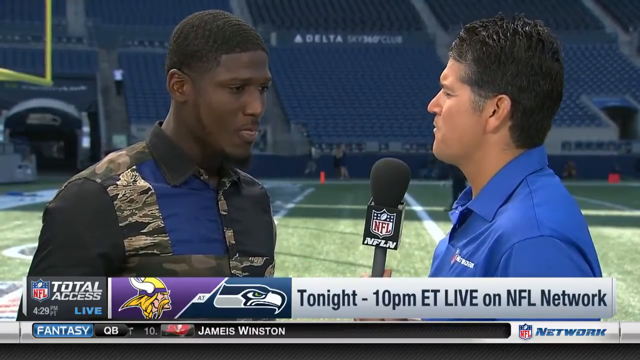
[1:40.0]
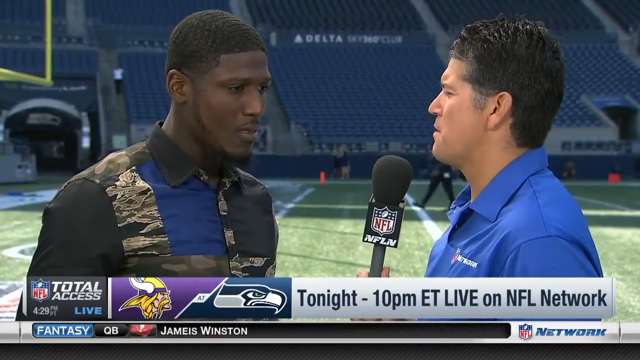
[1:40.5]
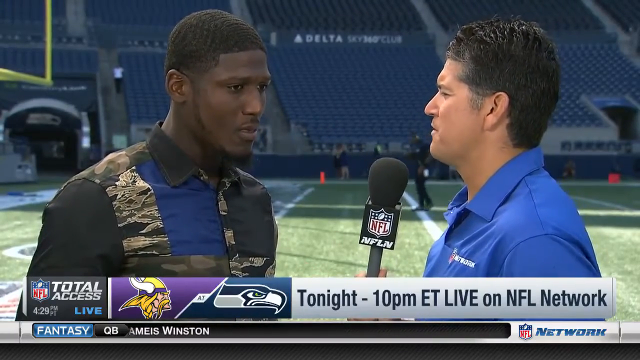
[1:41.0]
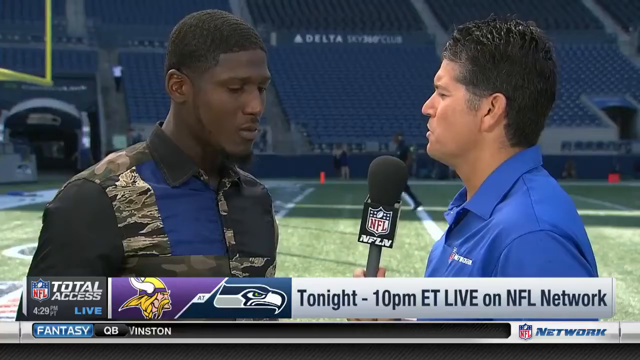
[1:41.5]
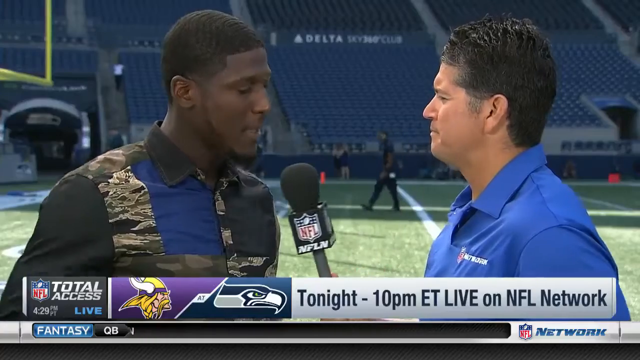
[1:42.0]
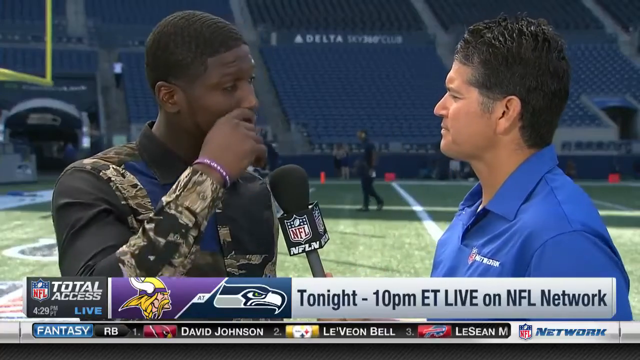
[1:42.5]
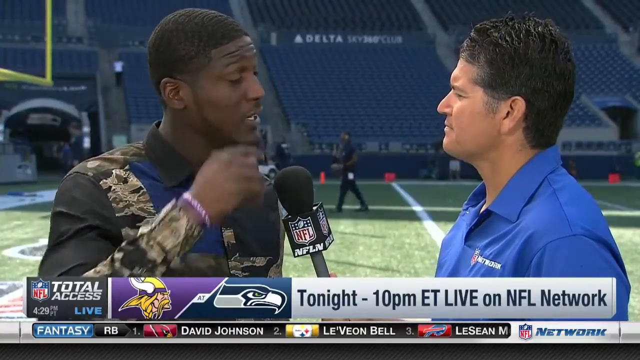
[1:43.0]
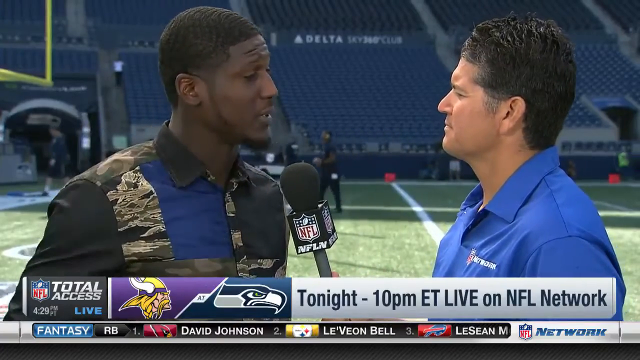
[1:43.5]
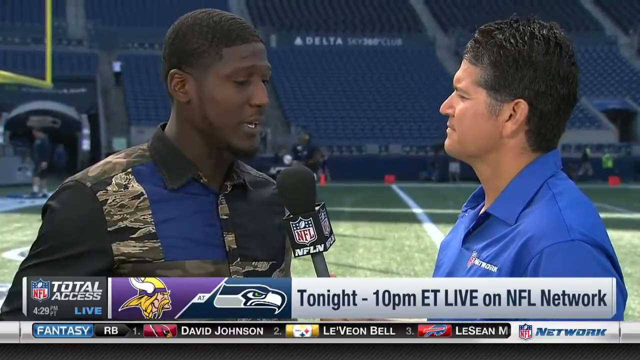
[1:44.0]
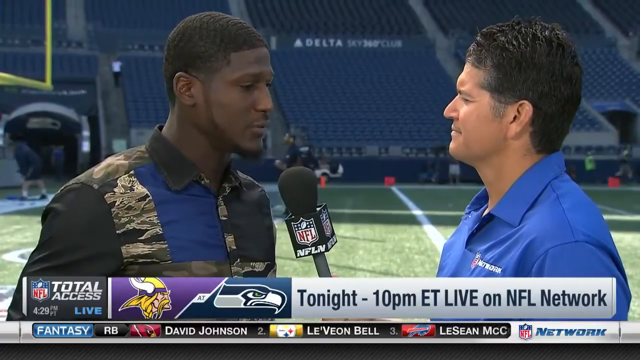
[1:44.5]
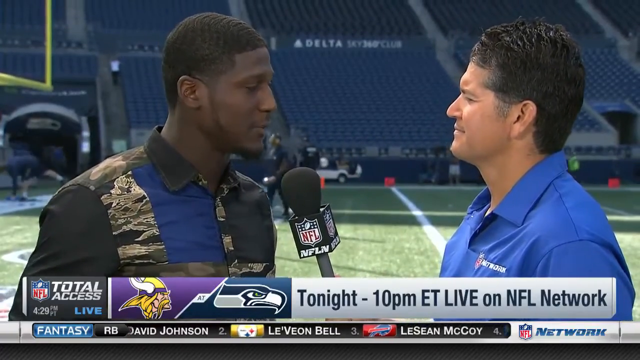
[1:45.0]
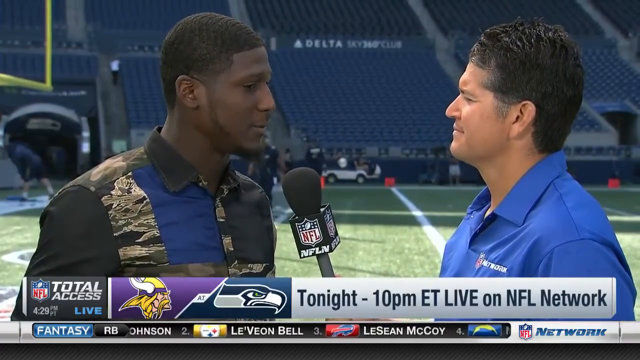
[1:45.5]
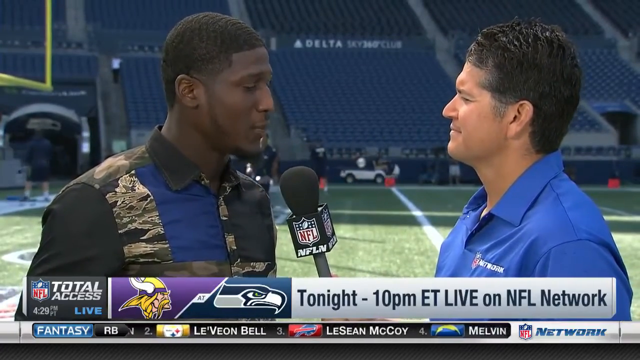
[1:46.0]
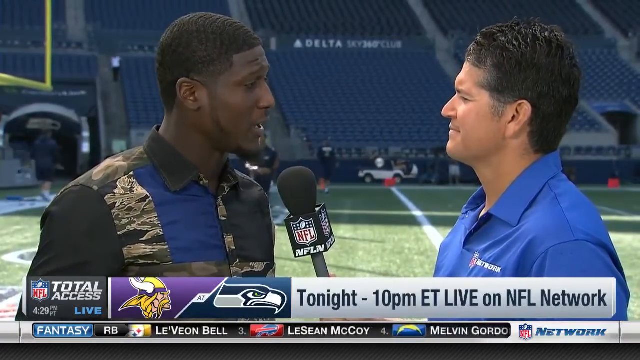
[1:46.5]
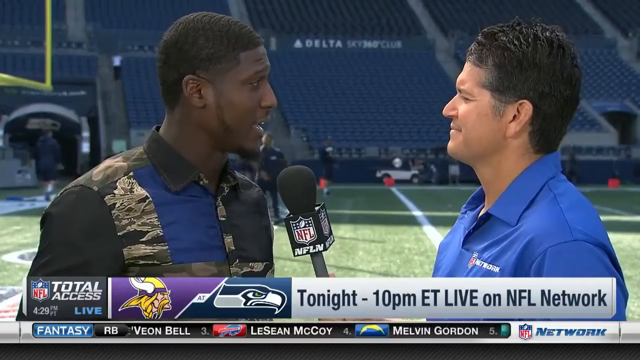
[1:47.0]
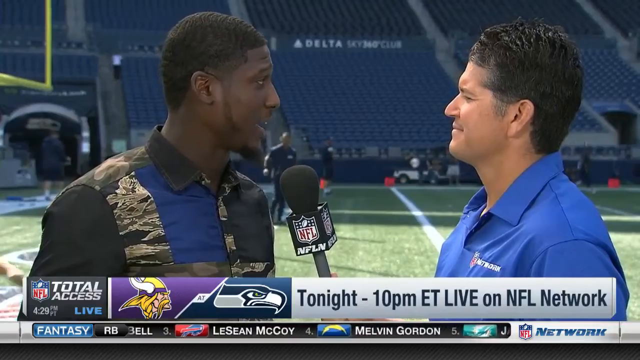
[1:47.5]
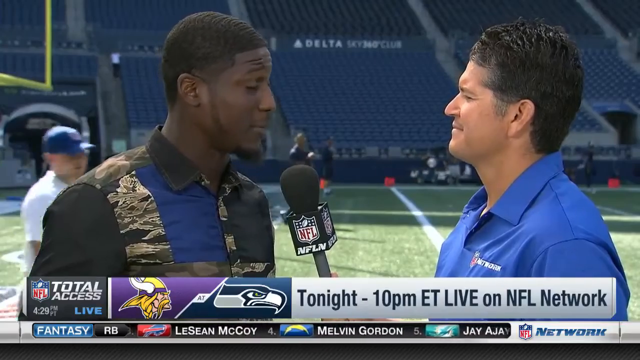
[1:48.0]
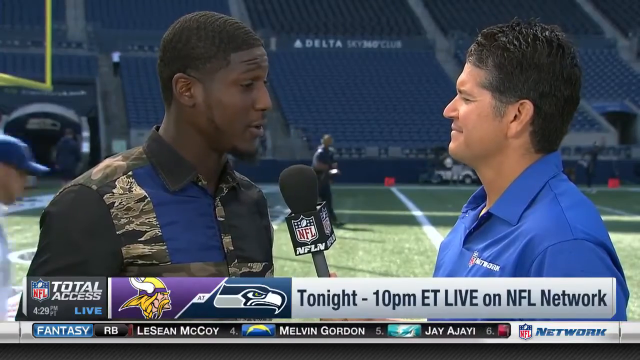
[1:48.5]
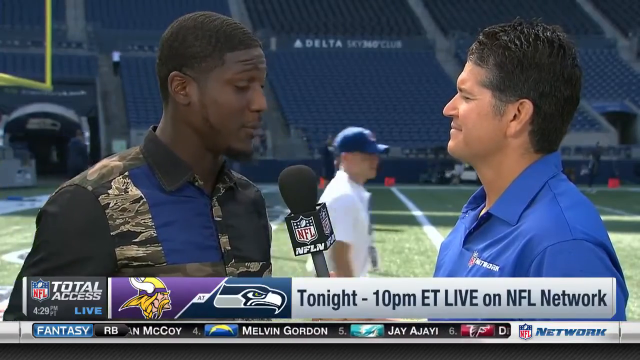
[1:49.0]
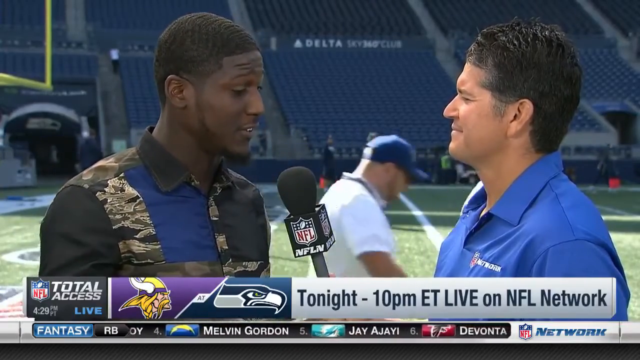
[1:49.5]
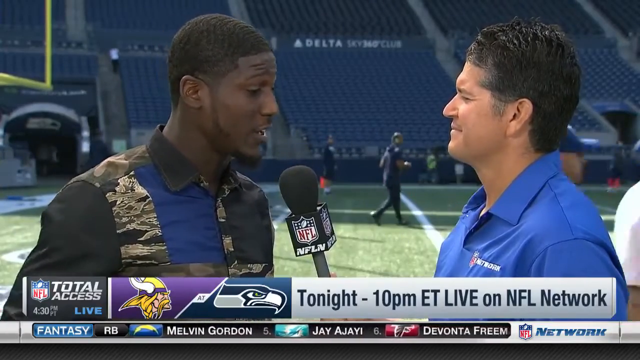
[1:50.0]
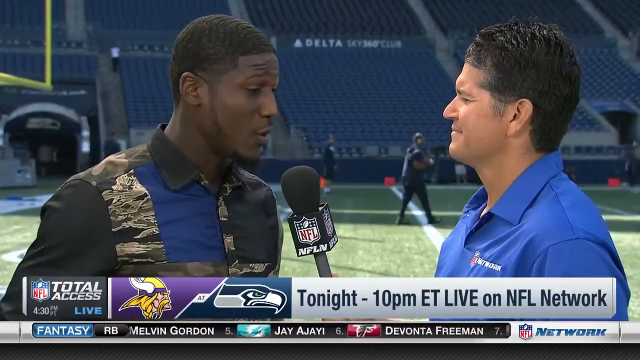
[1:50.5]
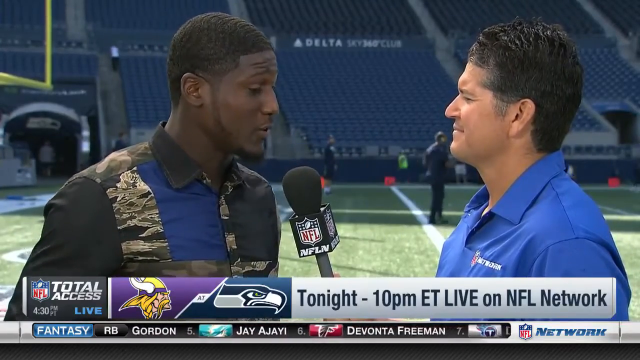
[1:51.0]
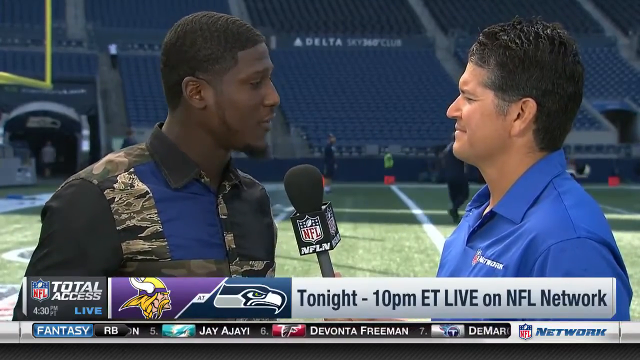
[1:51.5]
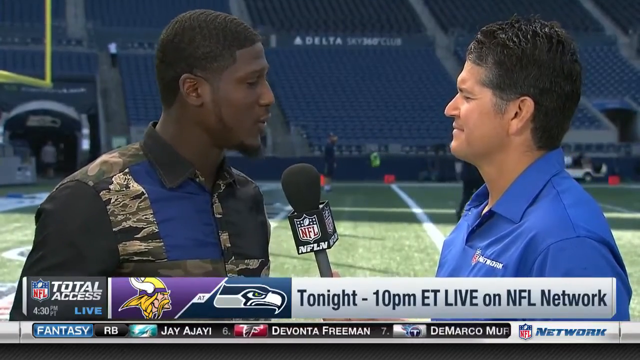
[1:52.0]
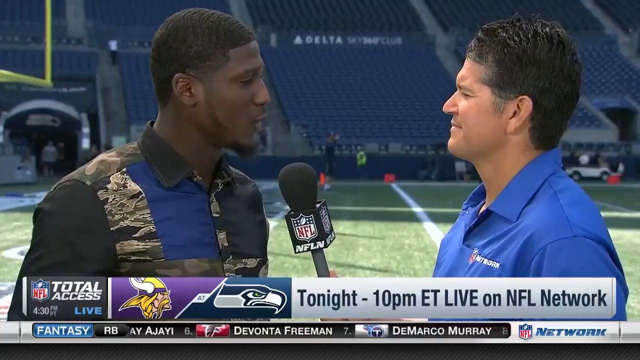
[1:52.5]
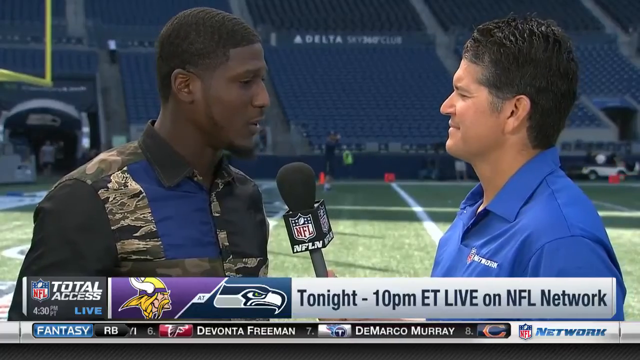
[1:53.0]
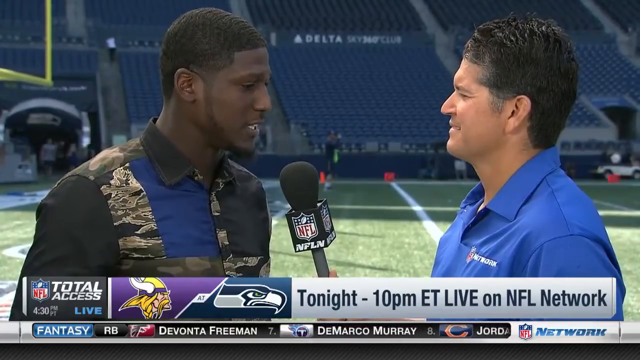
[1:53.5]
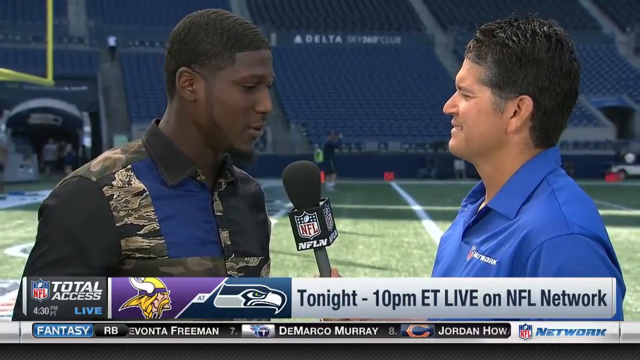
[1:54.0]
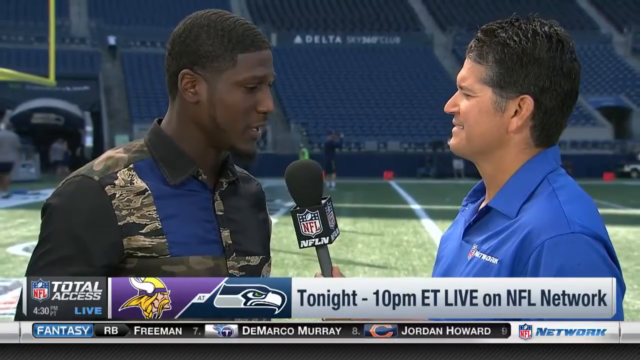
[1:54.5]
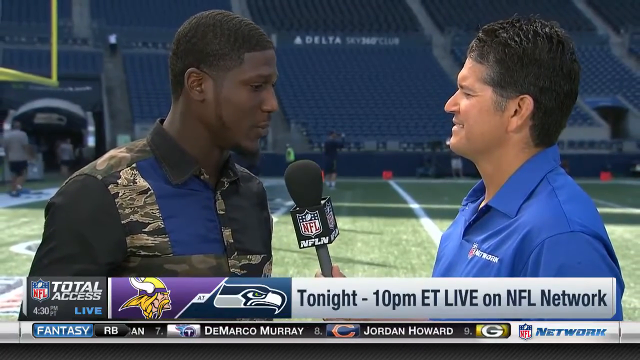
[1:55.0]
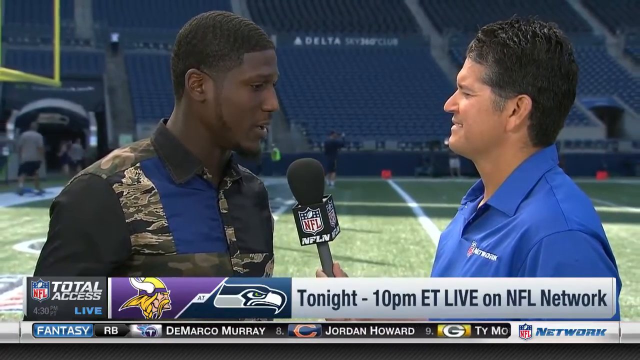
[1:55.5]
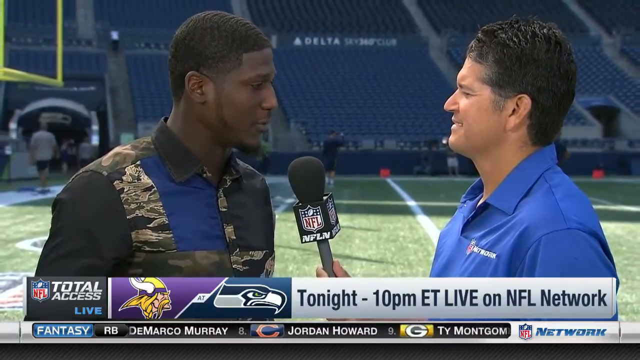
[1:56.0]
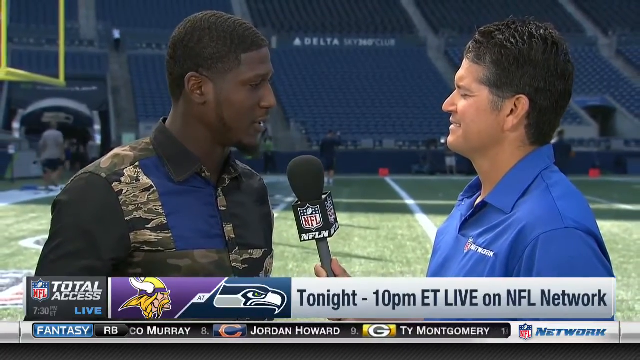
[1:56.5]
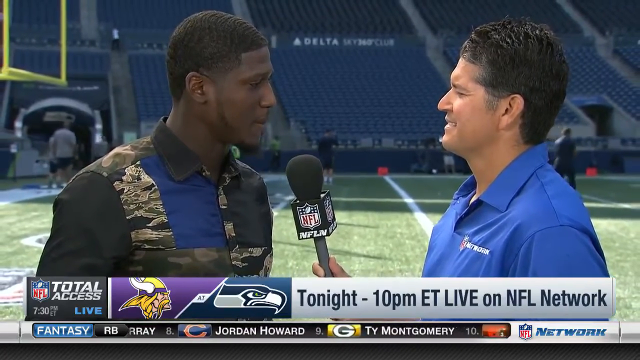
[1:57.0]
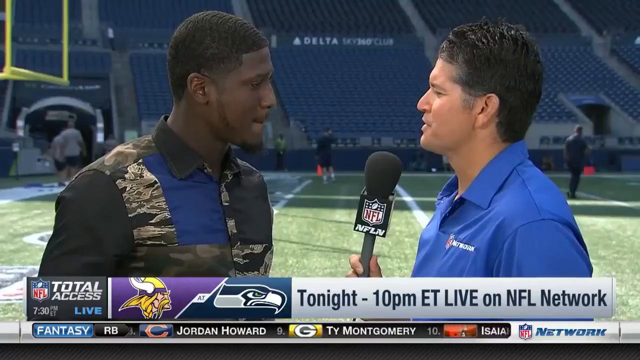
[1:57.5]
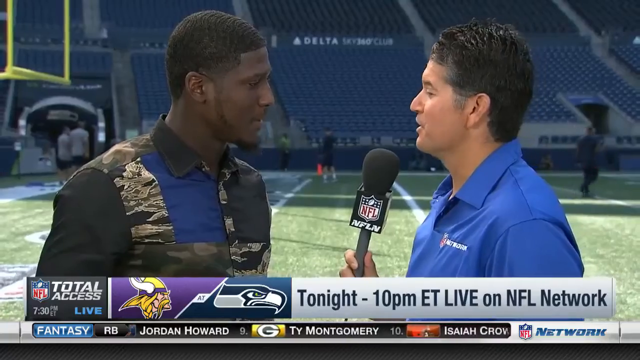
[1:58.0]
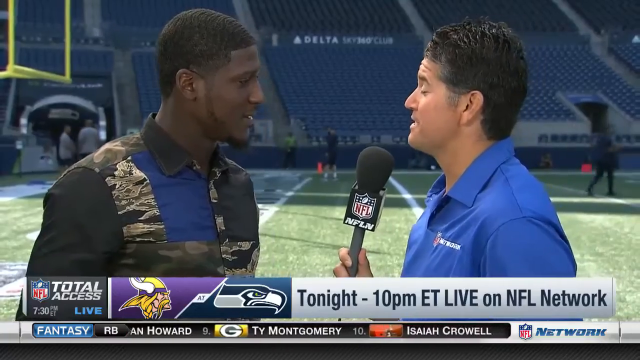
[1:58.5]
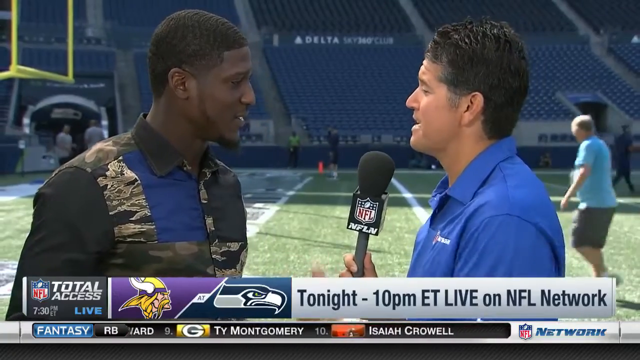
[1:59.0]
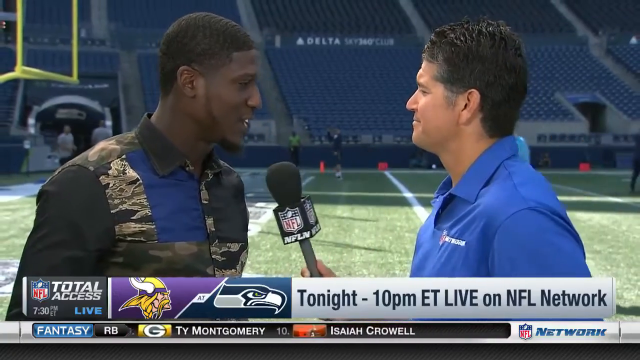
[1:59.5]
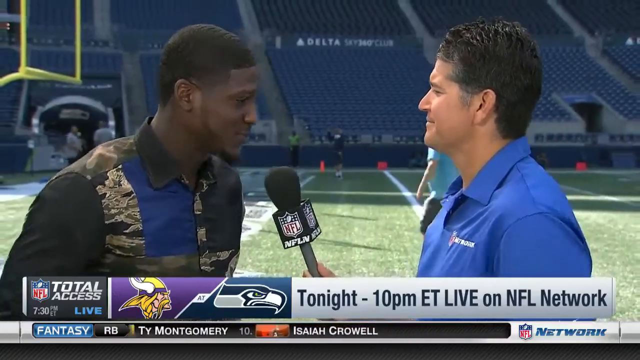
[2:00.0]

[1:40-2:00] Two men face each other with their sides towards the camera. The man on the right holds a microphone in his left hand. The man standing opposite him, a Black man, has his tongue stuck out, seemingly deep in thought. The man on the right holds the microphone under his own mouth and asks the other man a question, then moves the microphone under the other man's mouth. Just then the other man brings his right arm up, uses his forefinger to kind of scratch underneath his nose, and drops his arm back down to his side. He talks into the microphone, looking kind of over the other man's shoulder but generally keeping good eye contact. In the background a couple of short people, kind of like children, walk by in white shirts and blue baseball caps, and a small truck drives along the opposite side of the pitch as the background starts to get busier. When the man finishes speaking, the interviewer brings the microphone back under his own mouth to ask a further question, throws his left arm up in the air, lets it drop, and moves the microphone back under the other man's mouth.